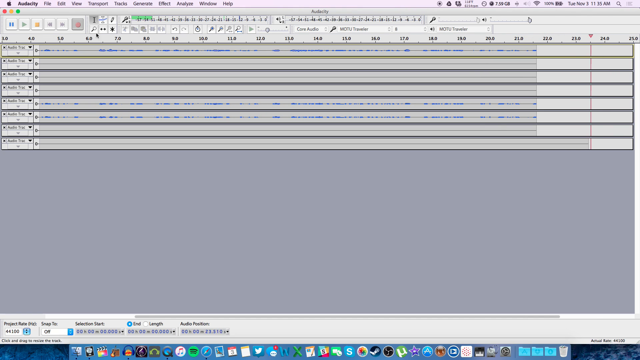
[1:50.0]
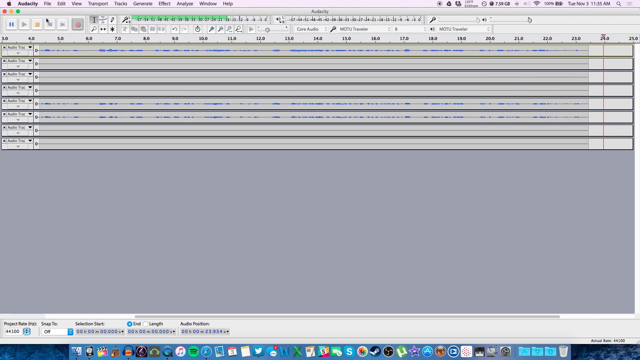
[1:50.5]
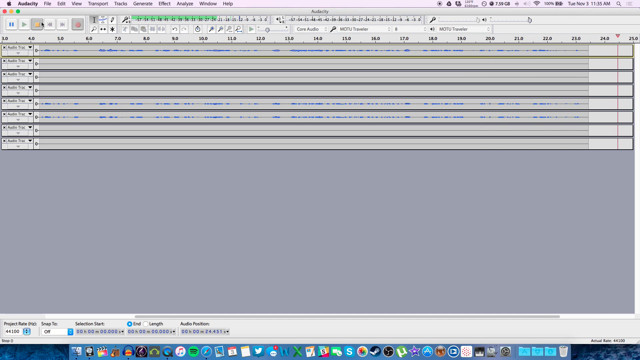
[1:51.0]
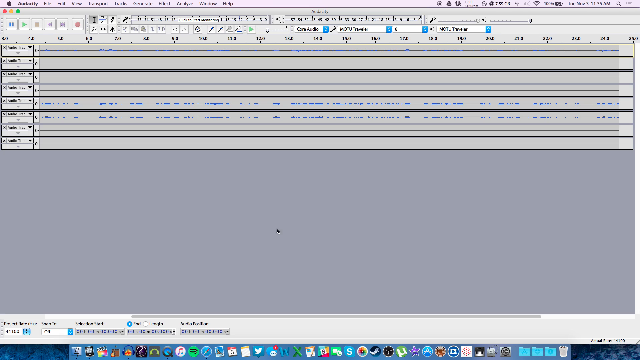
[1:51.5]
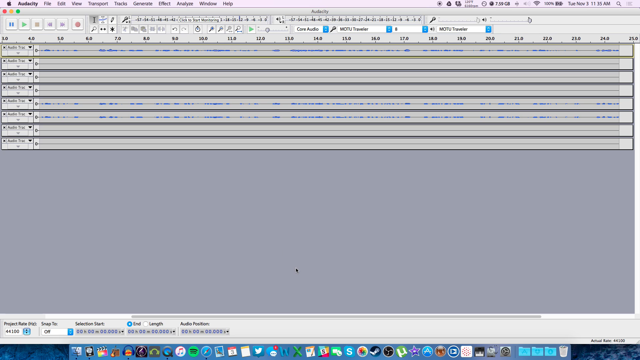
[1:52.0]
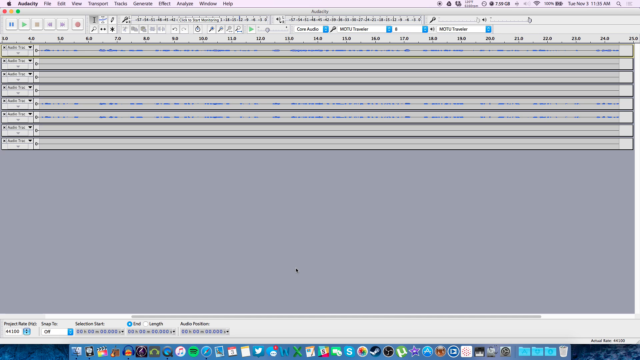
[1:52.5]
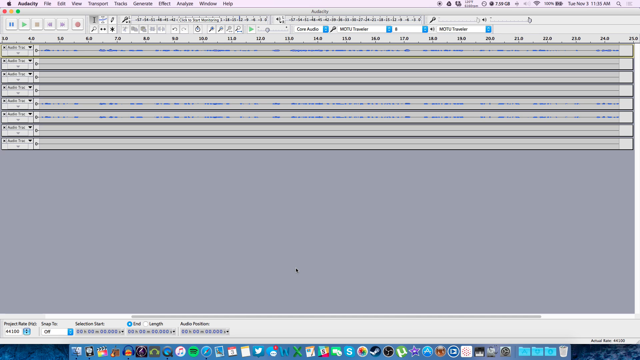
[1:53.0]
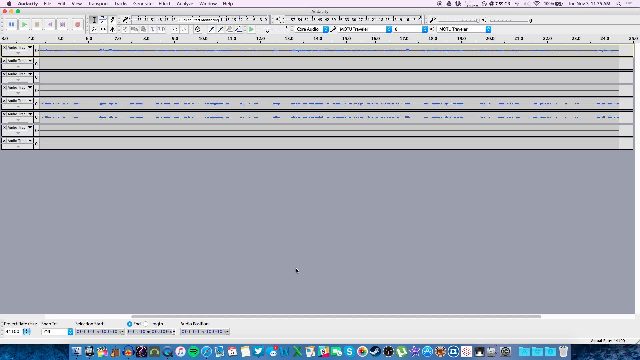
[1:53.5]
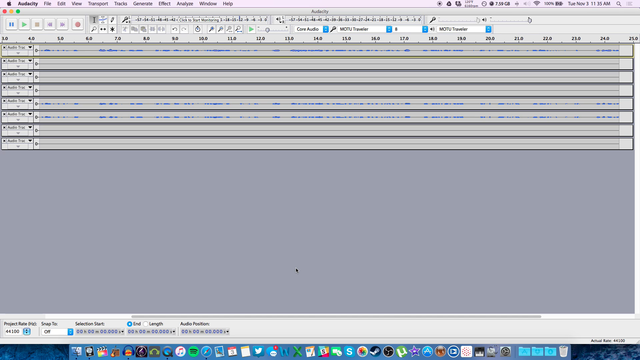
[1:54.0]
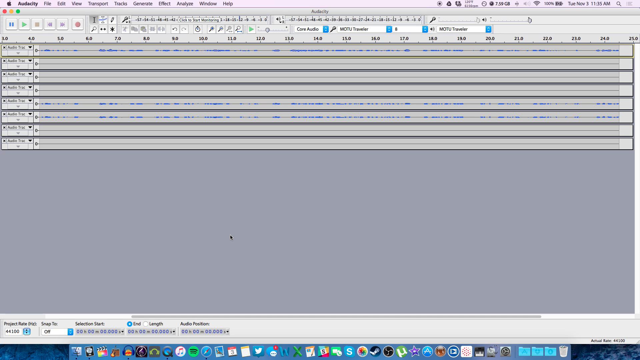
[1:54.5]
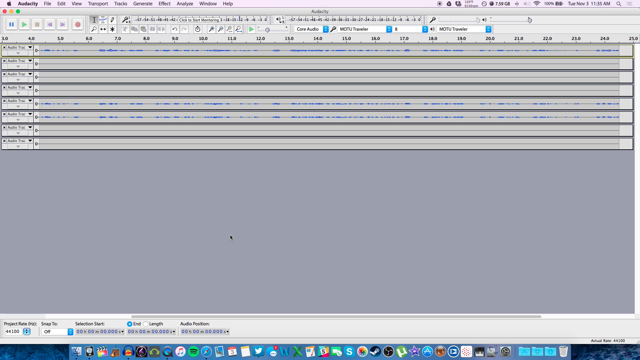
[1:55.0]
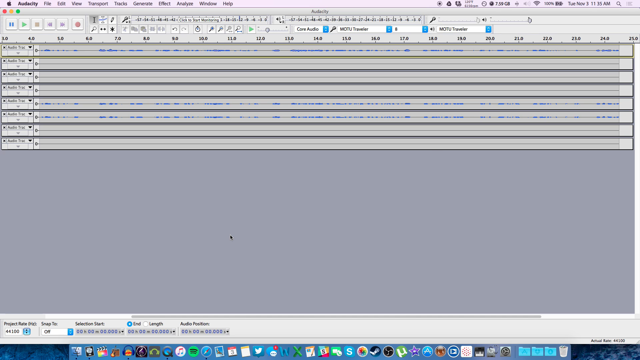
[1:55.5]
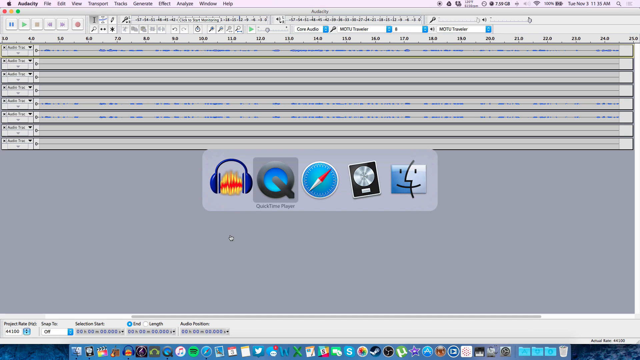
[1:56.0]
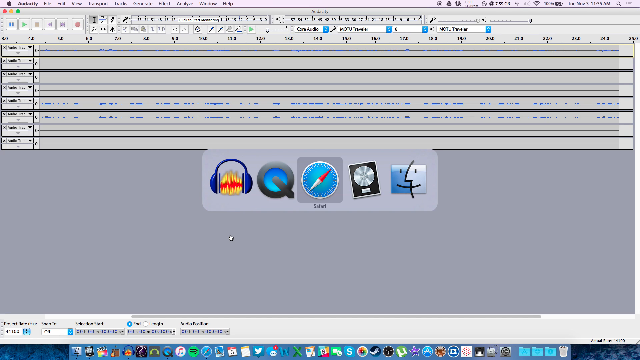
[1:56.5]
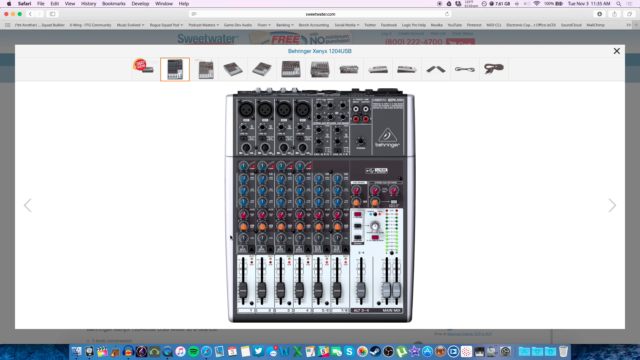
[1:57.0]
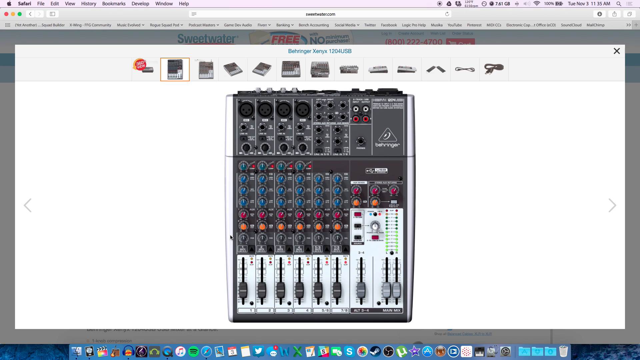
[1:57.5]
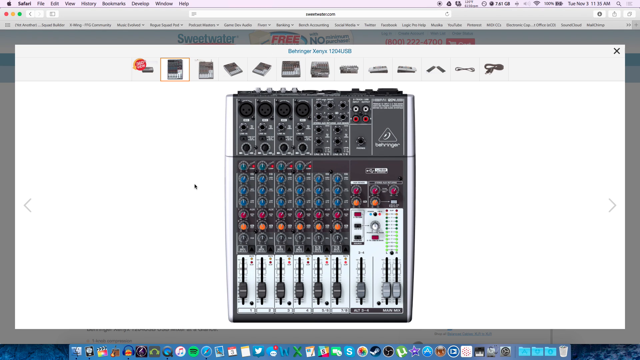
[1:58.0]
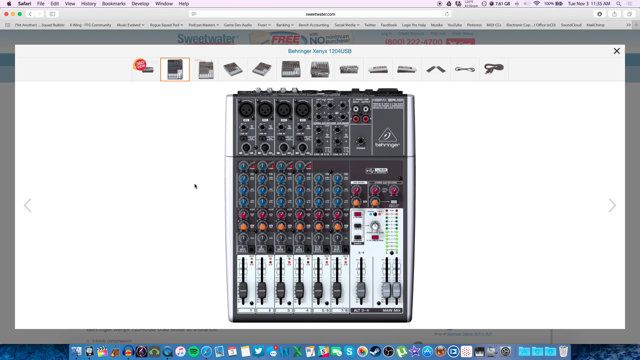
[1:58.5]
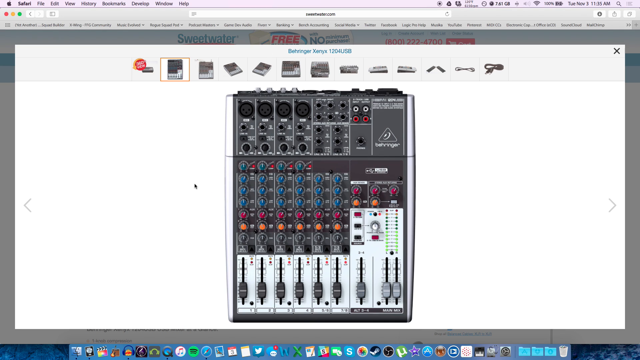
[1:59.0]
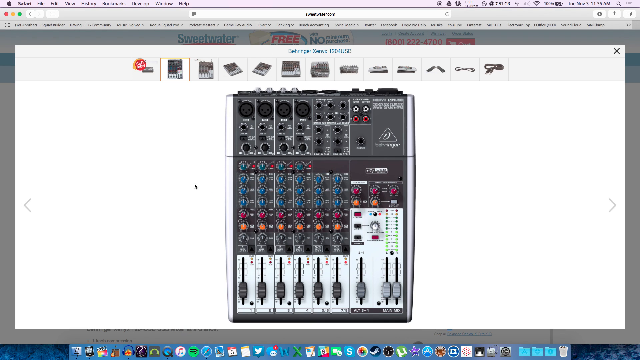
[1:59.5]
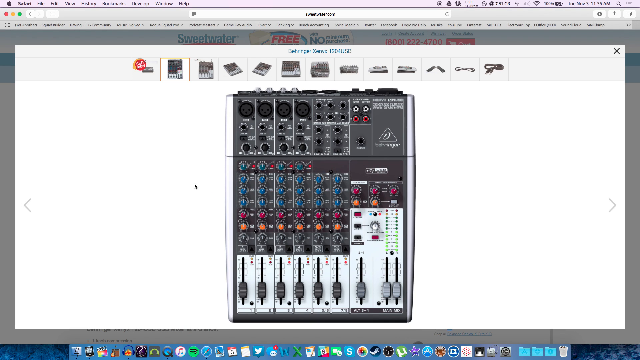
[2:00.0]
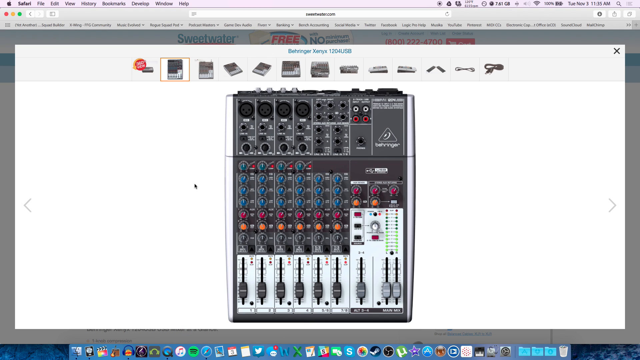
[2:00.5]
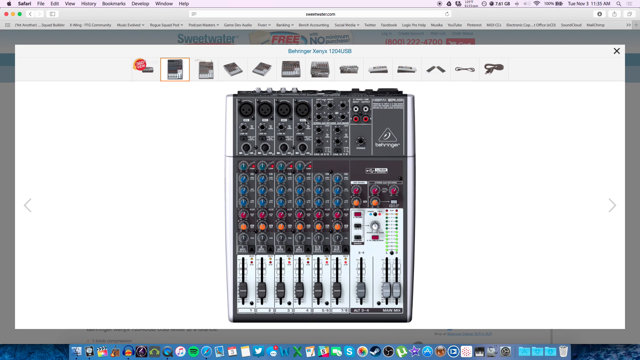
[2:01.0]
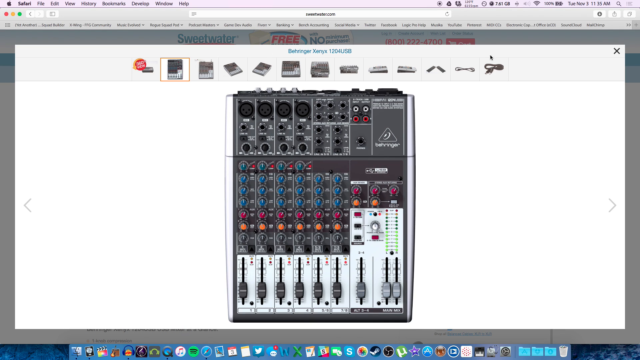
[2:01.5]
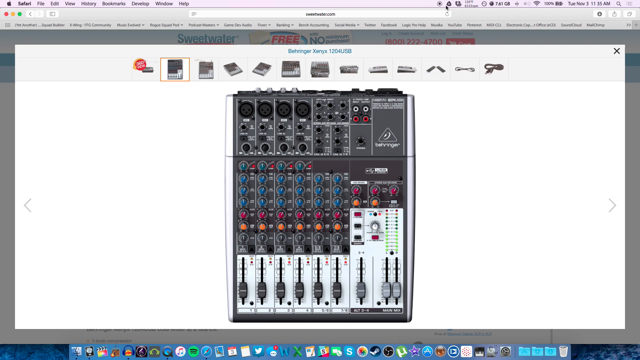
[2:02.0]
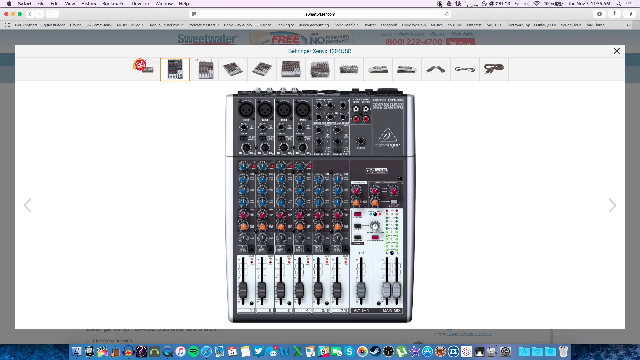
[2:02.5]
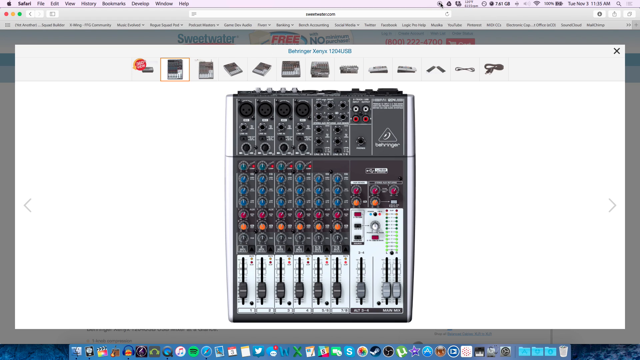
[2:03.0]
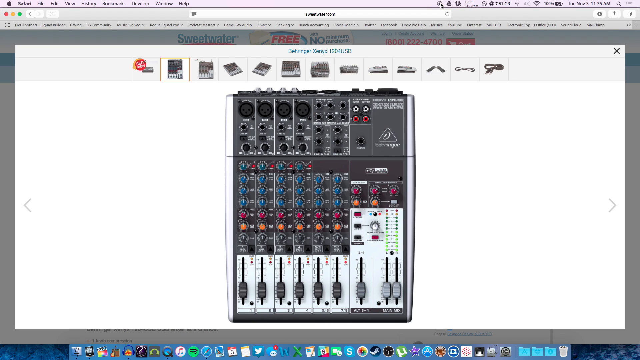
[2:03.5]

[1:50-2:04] The person presses the pause button, and the recordings pause at almost the 25-second mark. The first recording has a blue line, the second, third and fourth don't appear to have anything in them, the fifth and sixth have the blue line, and the seventh and eighth don't appear to have anything in them. The logos from the pop-up come back up, including the headphones, the Safari one, the record player and the person with two faces, and then the view returns to the switchboard image on the website, still on the second image. On the website there is a number, "800-22-470", but the pop-up from the picture is blocking it. The words "sweet water" are visible.